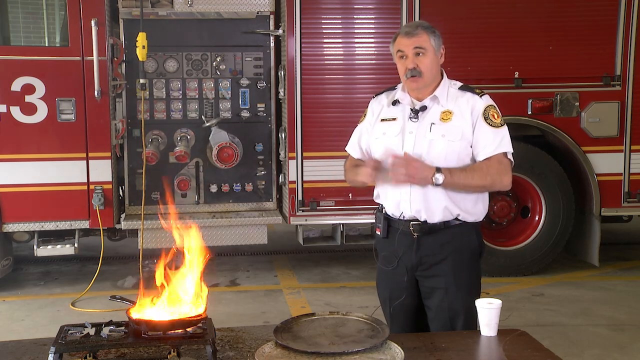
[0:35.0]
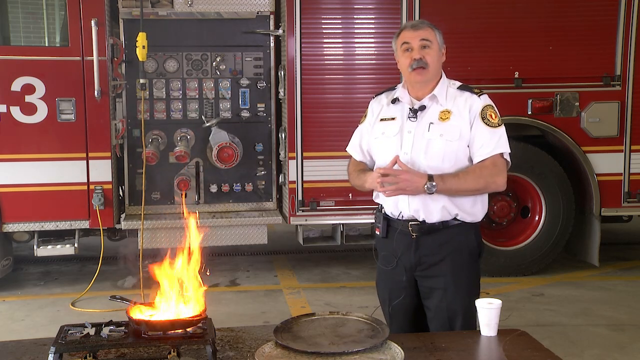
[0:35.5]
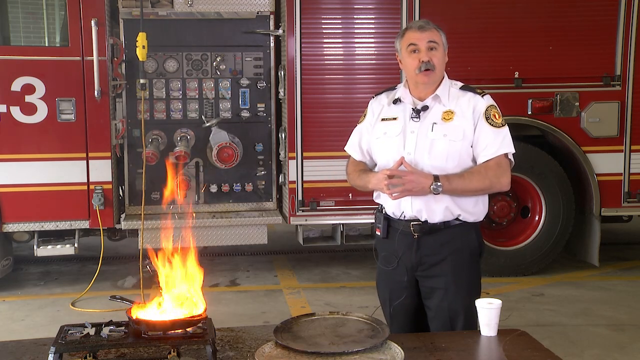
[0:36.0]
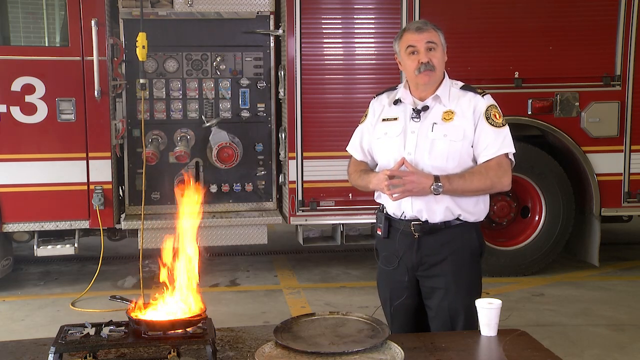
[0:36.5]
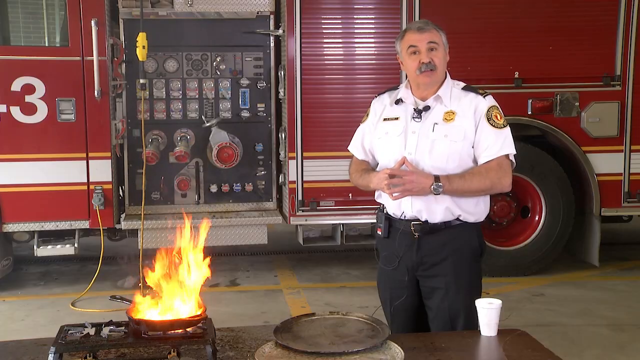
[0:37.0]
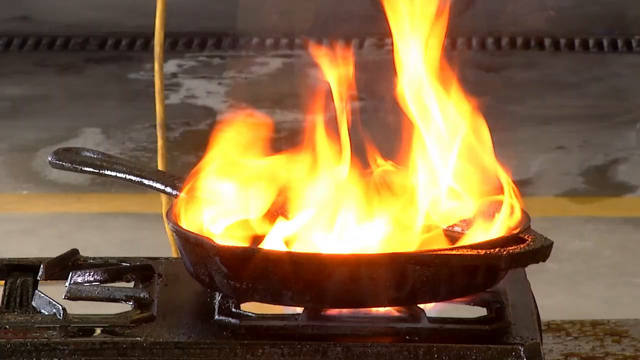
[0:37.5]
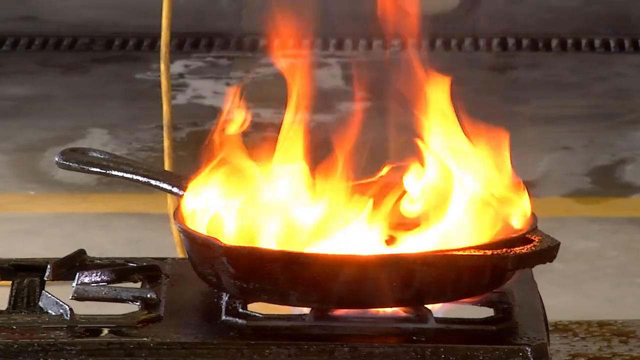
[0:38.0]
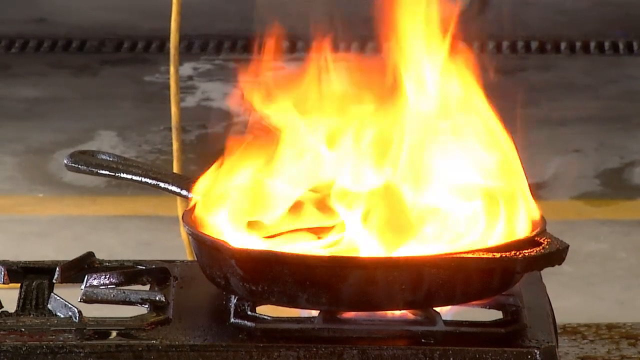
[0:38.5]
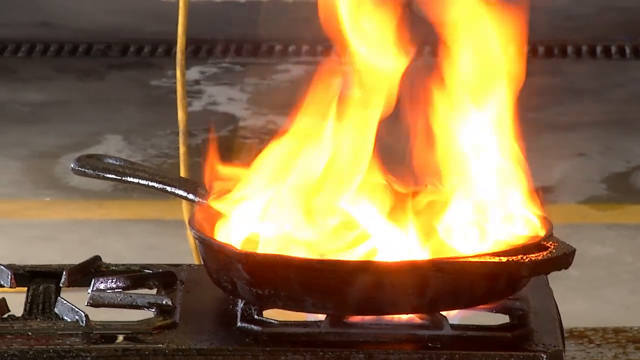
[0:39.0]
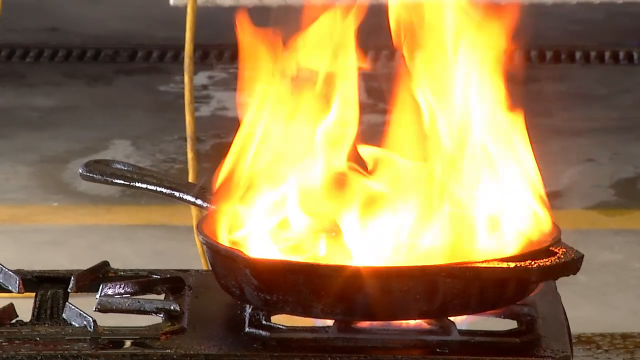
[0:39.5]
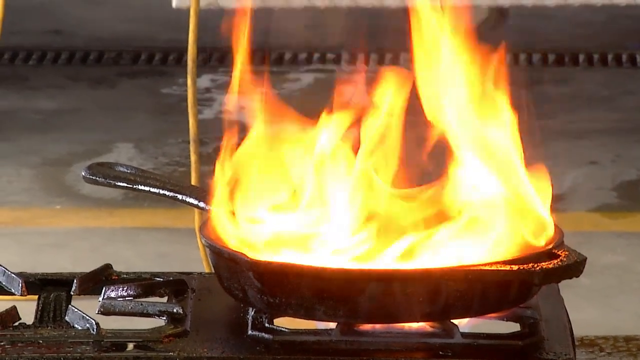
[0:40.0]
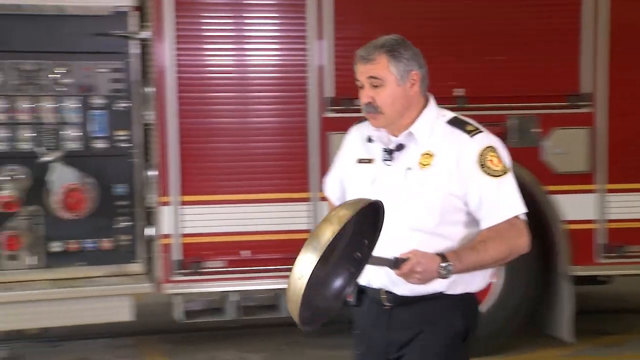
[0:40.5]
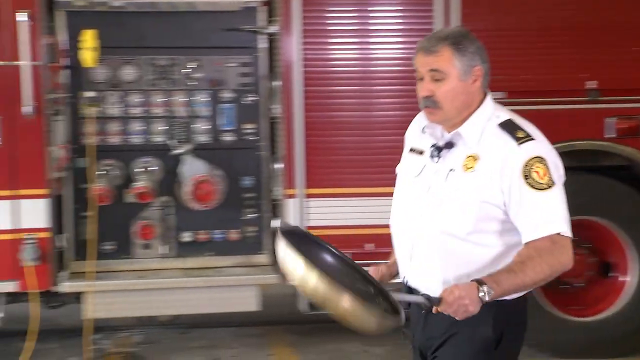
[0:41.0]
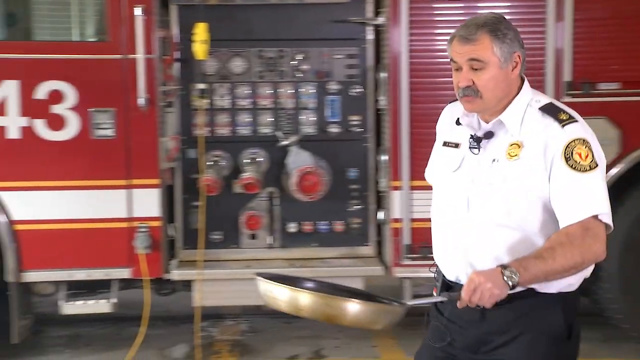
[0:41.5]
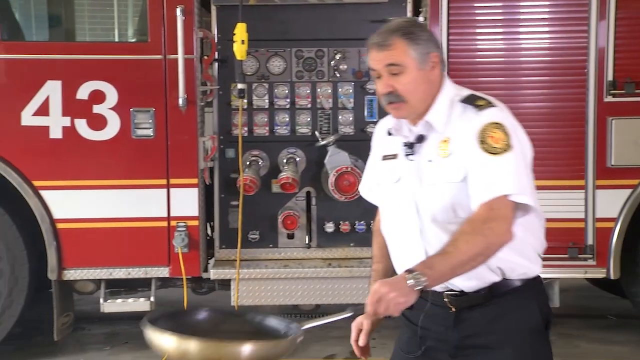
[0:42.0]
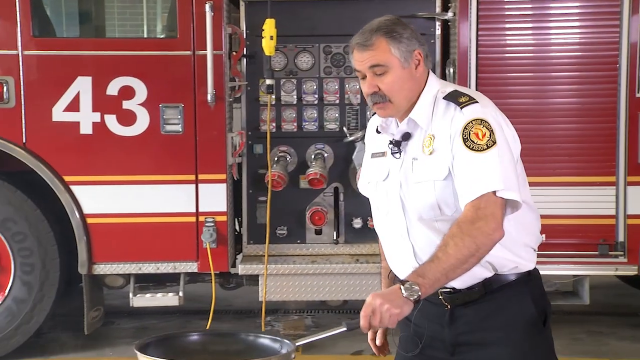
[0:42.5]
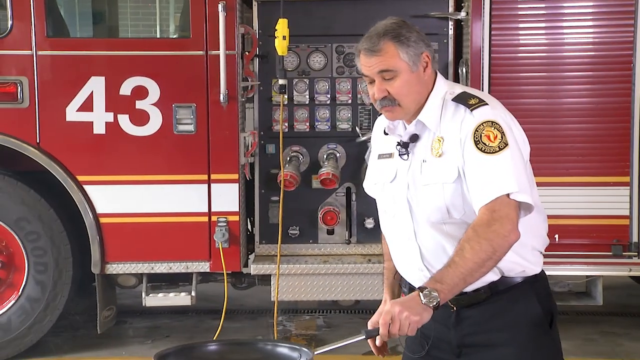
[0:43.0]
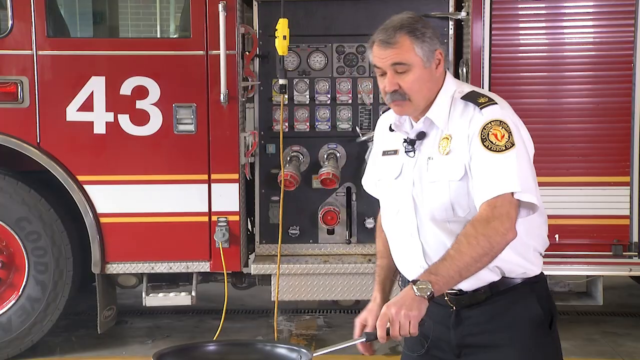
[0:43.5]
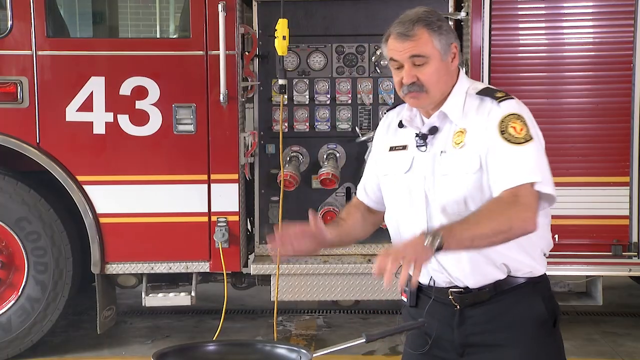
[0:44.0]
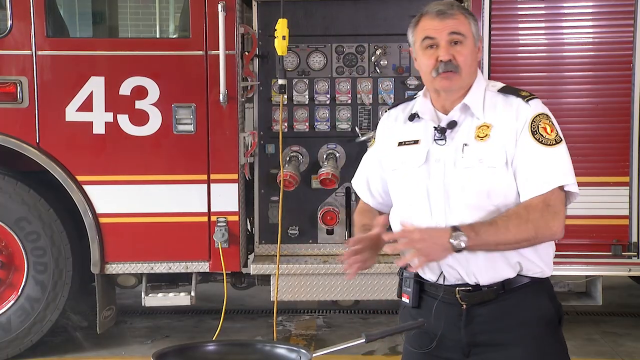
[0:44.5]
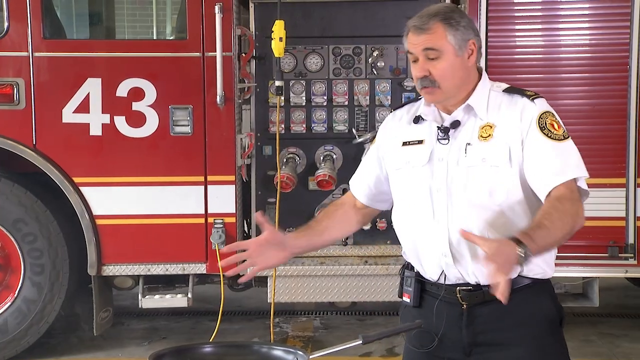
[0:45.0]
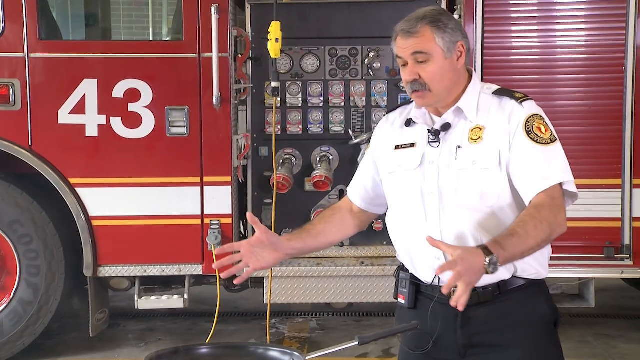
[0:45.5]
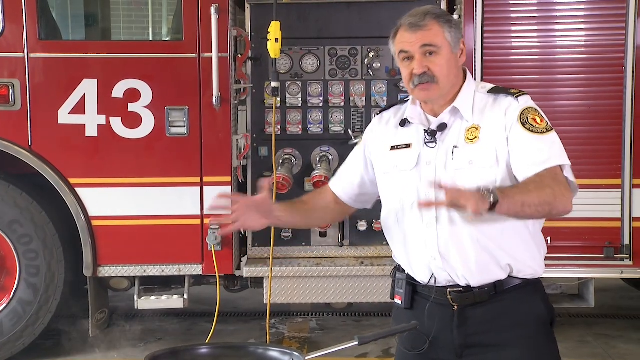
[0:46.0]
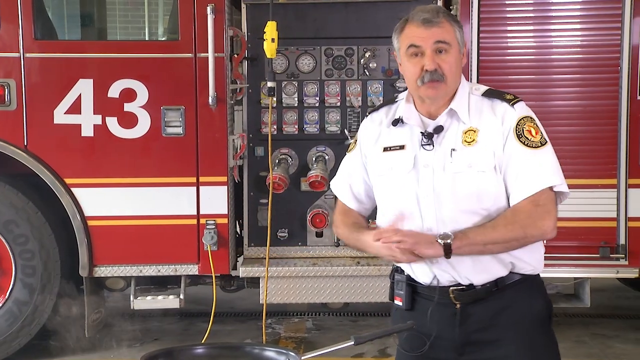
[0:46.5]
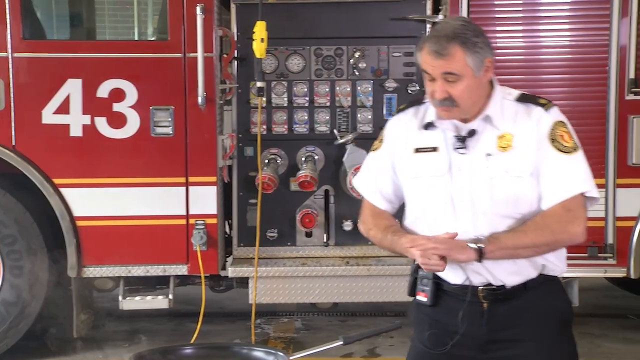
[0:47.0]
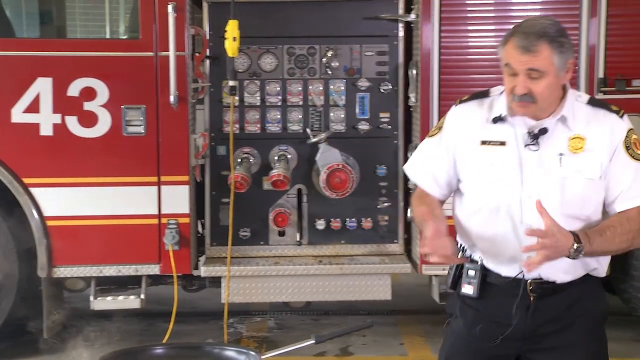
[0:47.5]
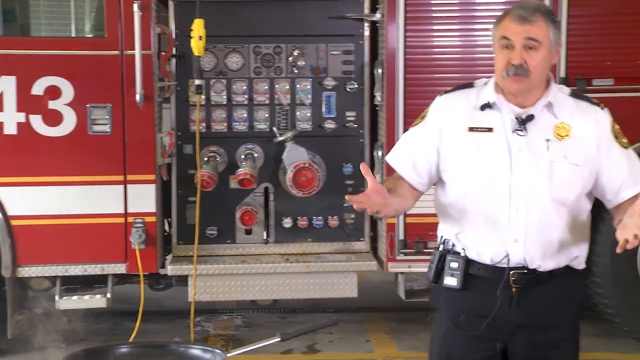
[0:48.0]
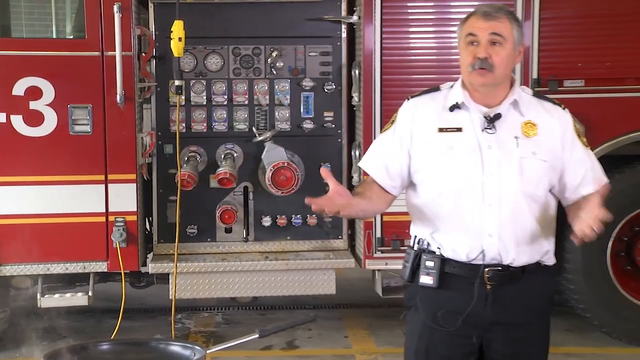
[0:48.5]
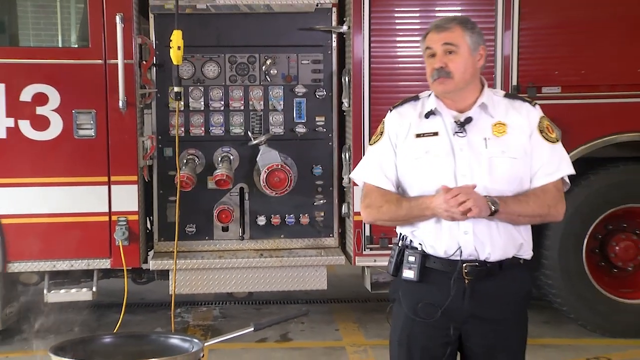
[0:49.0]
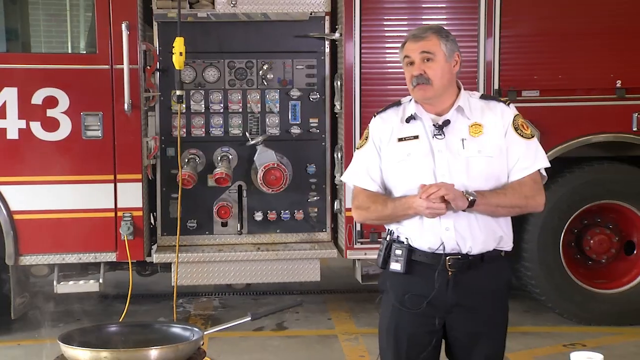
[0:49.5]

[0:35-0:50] A close-up shows the pan on fire. The flames still cover the full diameter of the pan; they are not quite as high as before but are still over a foot high. The assistant fire chief walks toward the pan with a very large skillet whose base is much larger than the opening of the burning pan, and he sets it right on top of the pan, sealing off the top. The fire is extinguished.